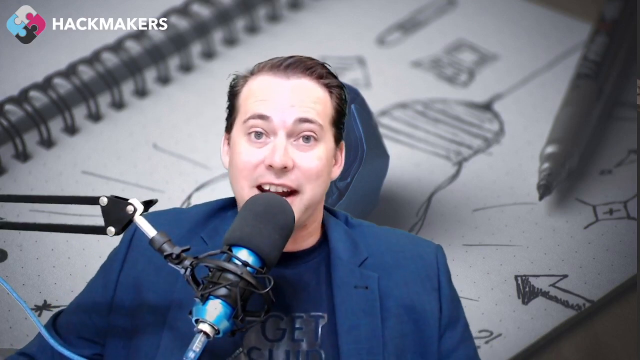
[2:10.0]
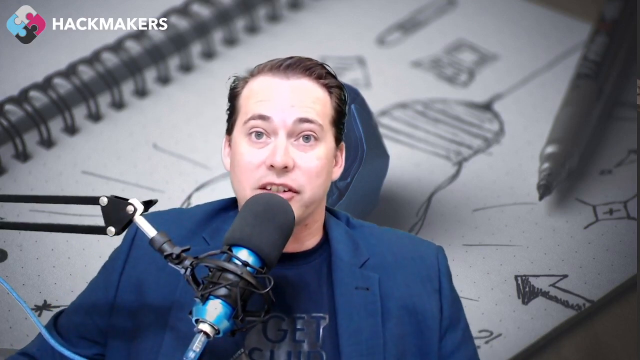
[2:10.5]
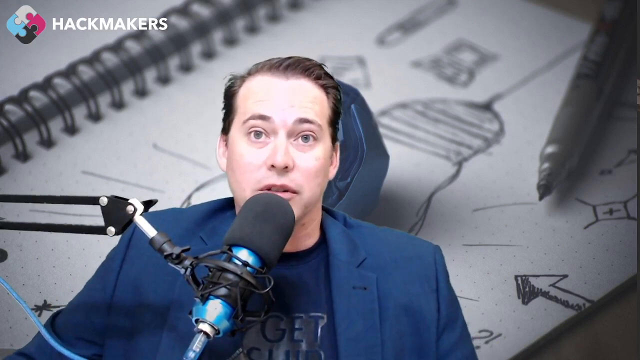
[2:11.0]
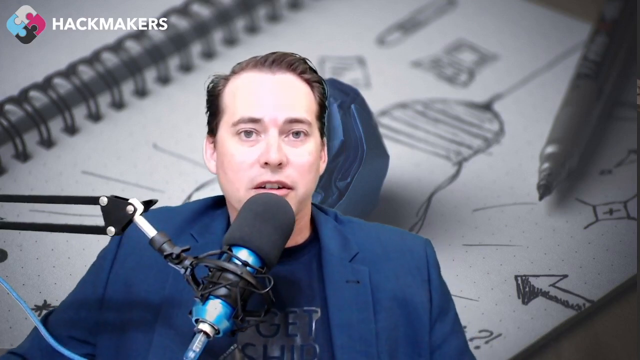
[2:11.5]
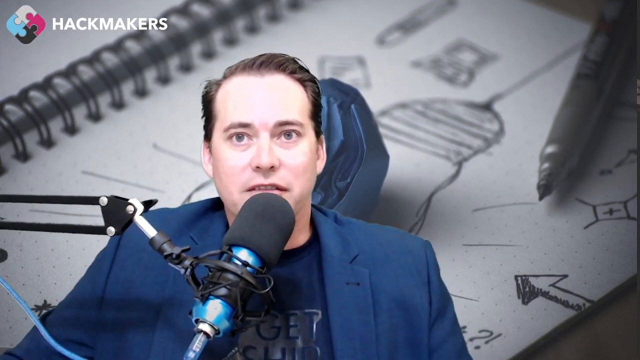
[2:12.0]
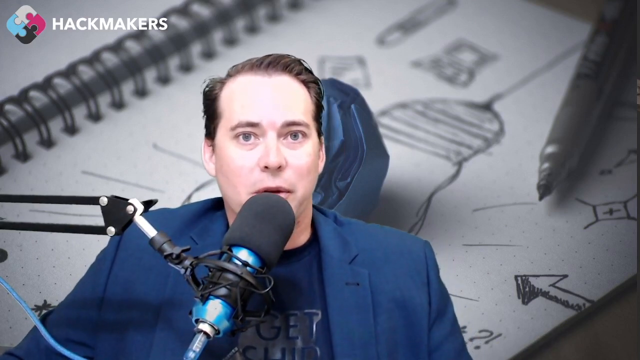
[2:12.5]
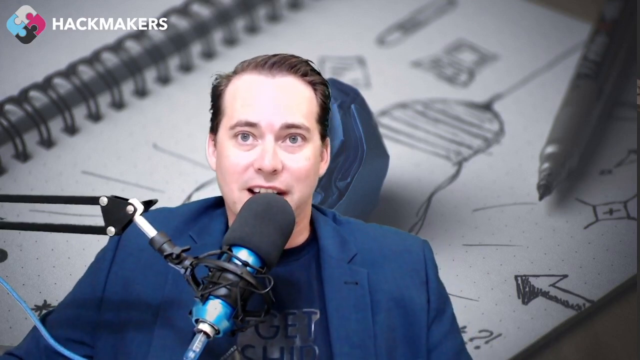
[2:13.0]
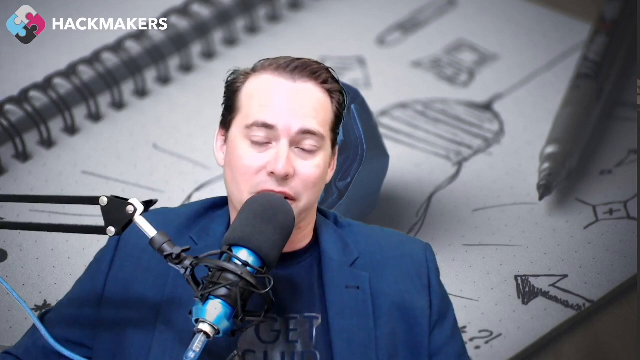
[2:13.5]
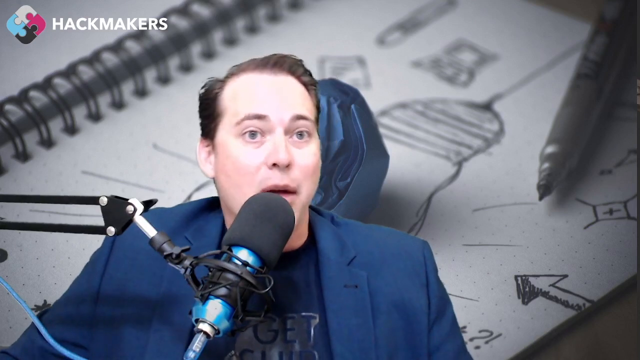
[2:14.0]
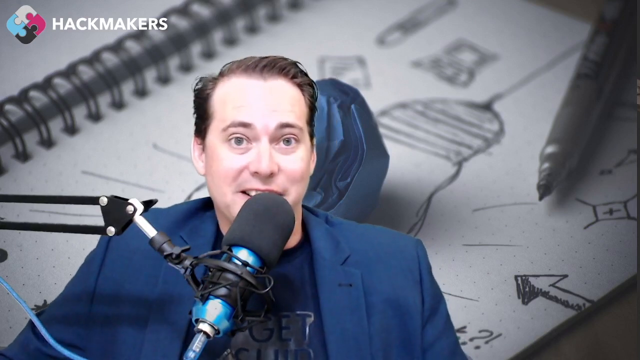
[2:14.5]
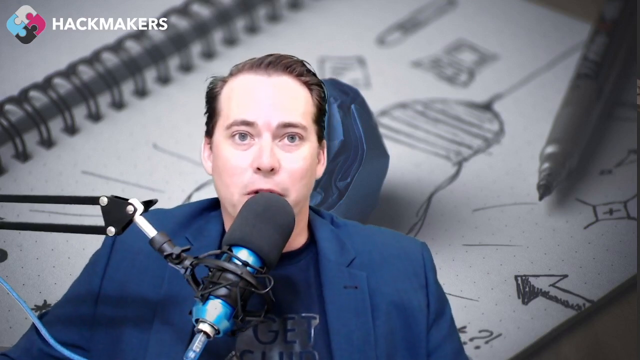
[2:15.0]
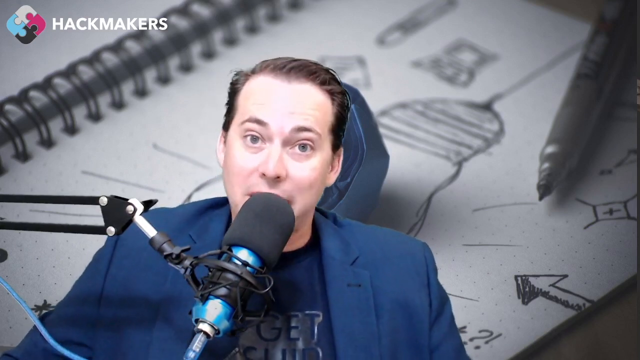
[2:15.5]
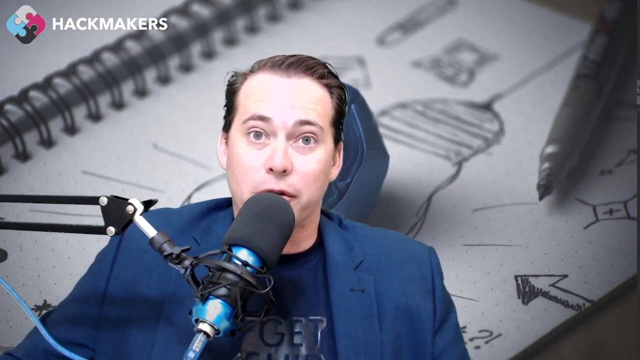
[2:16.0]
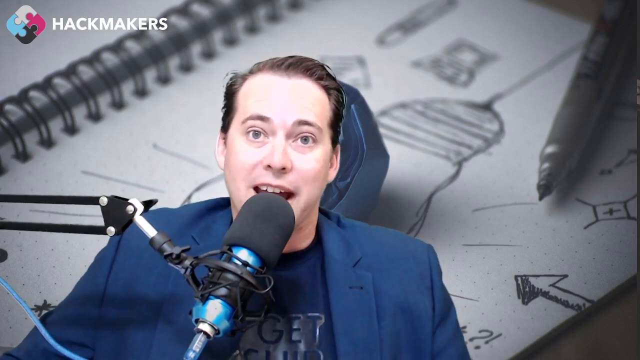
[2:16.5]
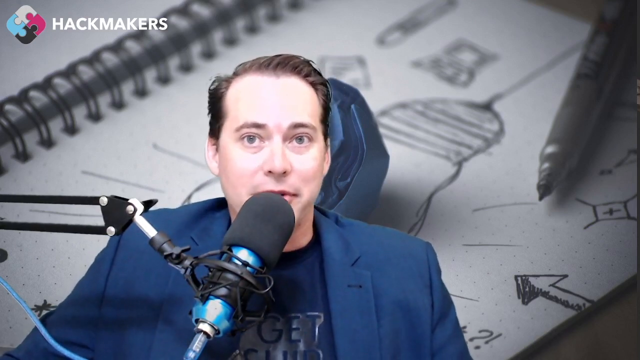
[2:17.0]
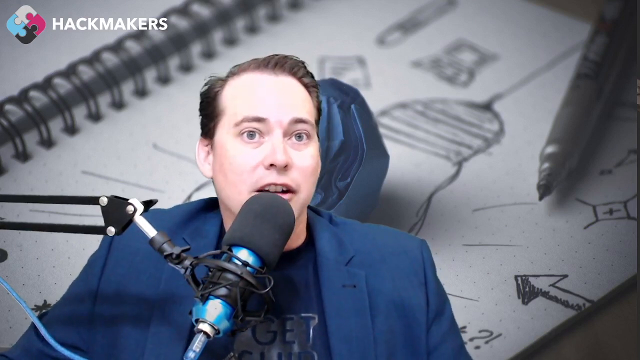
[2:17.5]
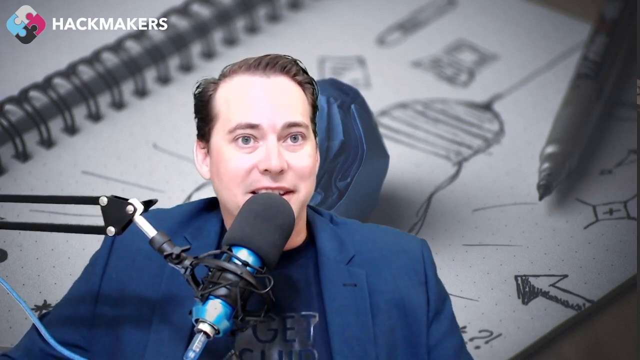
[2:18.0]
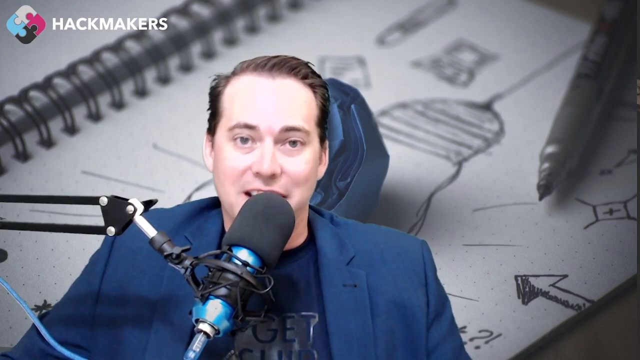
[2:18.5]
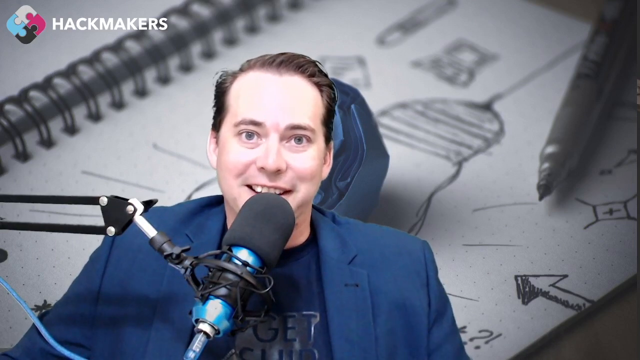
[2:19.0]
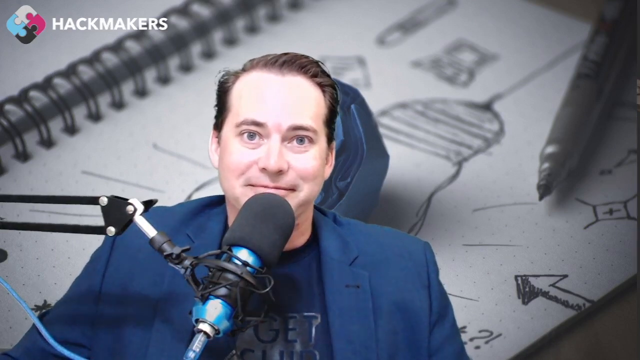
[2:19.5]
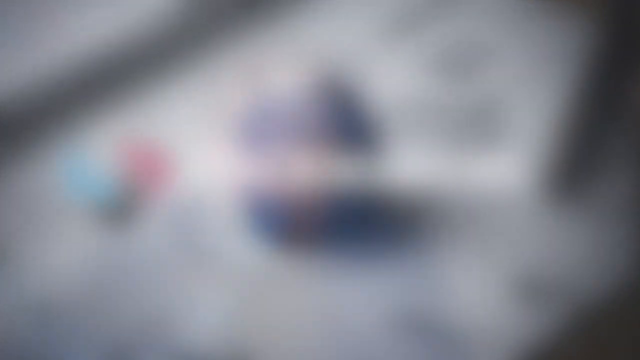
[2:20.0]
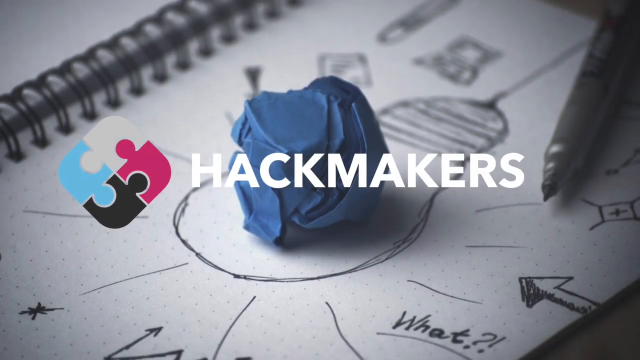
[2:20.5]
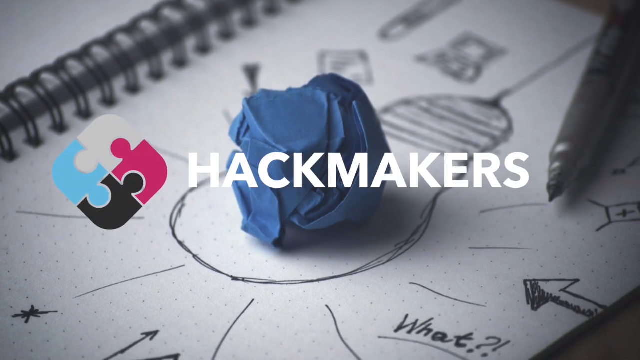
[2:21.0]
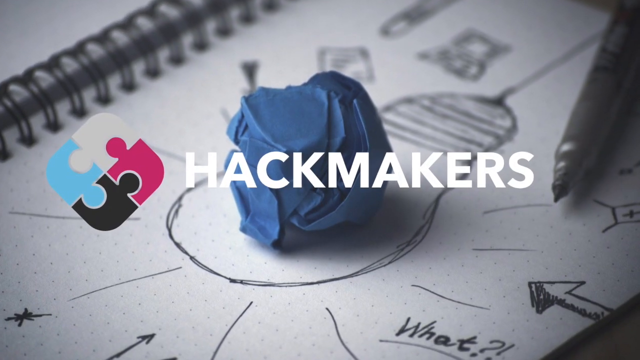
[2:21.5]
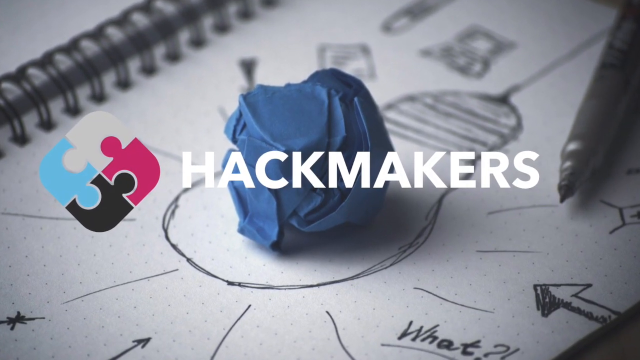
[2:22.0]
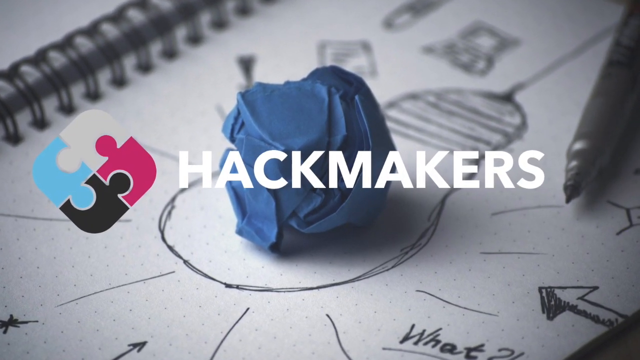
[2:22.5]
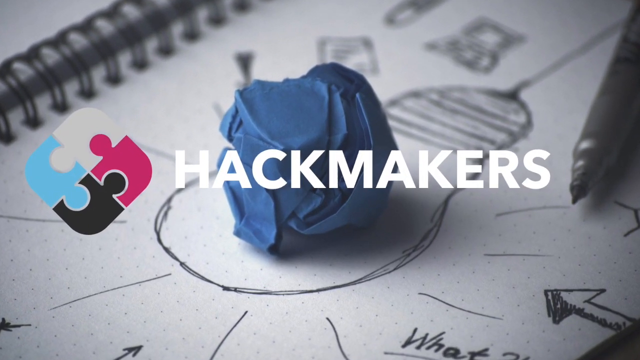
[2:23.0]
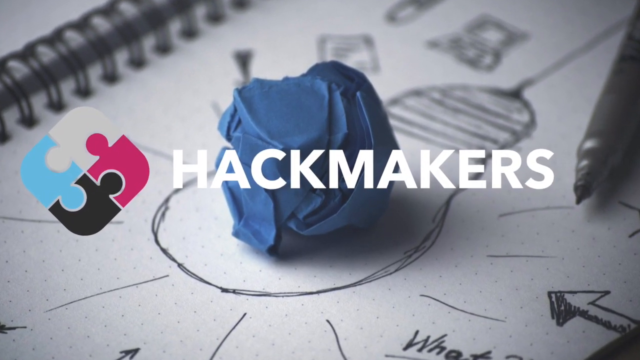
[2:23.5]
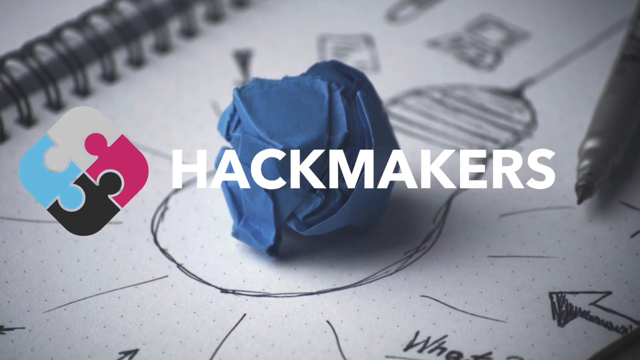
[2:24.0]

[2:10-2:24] The microphone has a transparent blue cable, and the microphone base is also blue, while the front end of the microphone is covered with black foam. The boom arm comes out of the left side onto the middle right and has two metal pieces. The microphone is inserted in a black shock mount that has some strings. The background is still, not moving: a white book with some drawings or idea drawings on it.